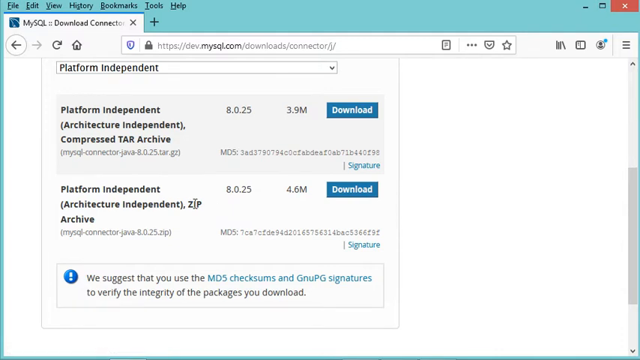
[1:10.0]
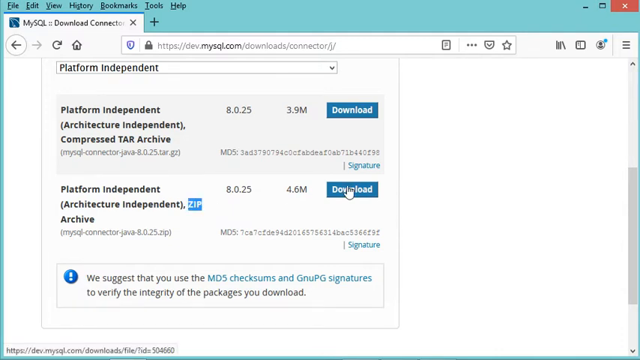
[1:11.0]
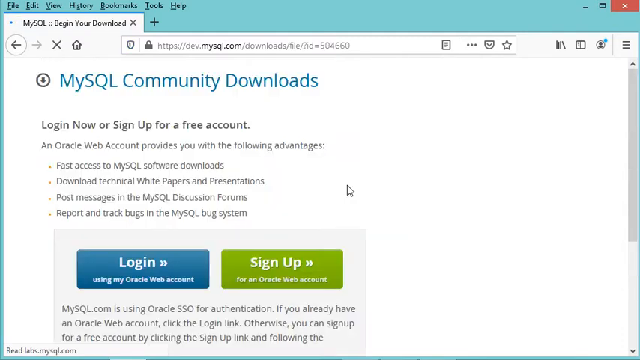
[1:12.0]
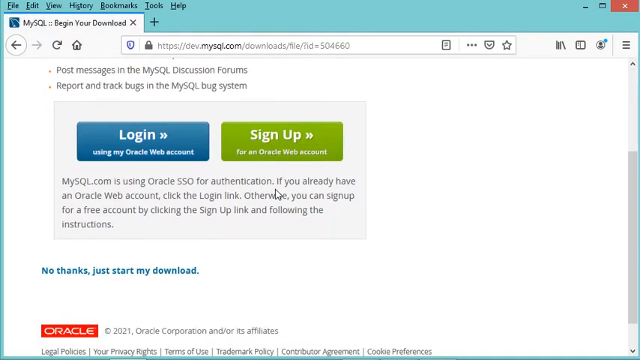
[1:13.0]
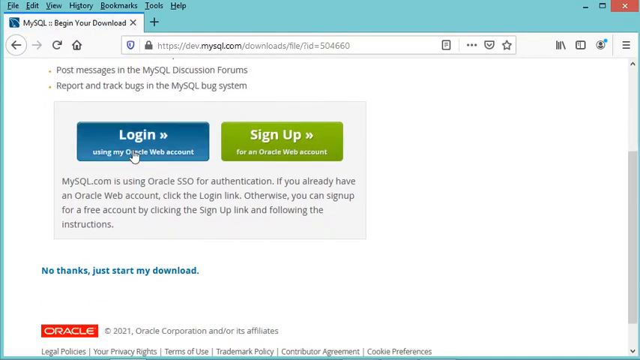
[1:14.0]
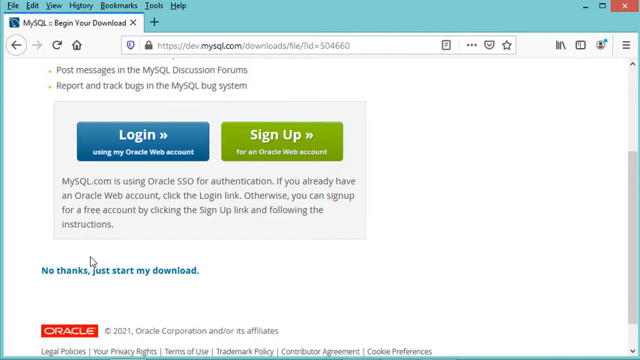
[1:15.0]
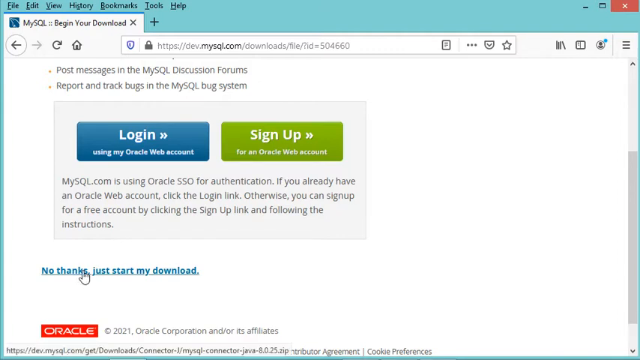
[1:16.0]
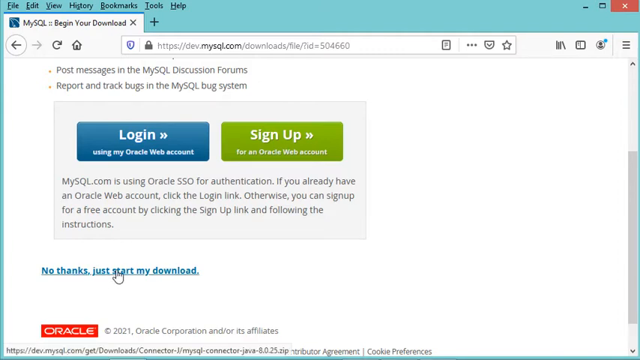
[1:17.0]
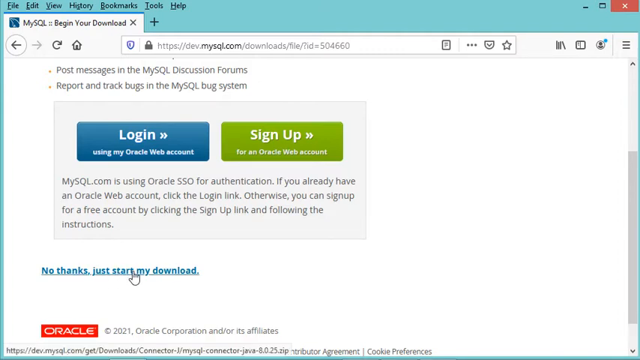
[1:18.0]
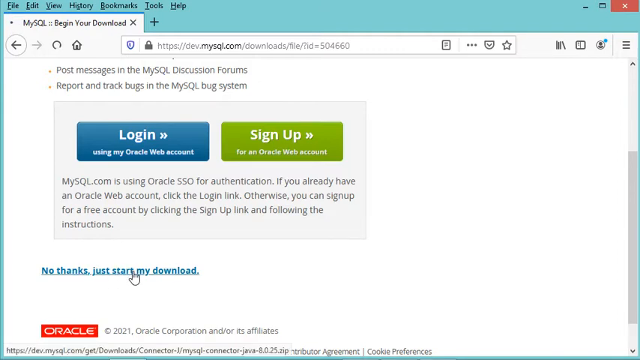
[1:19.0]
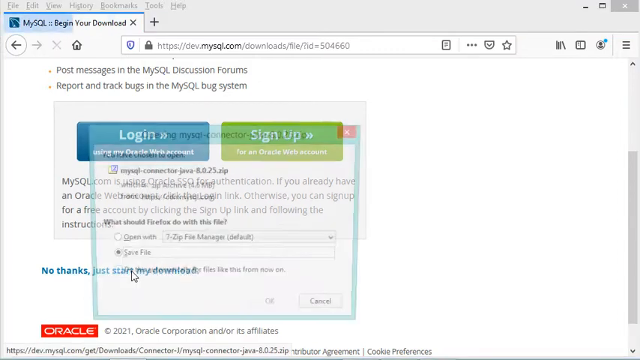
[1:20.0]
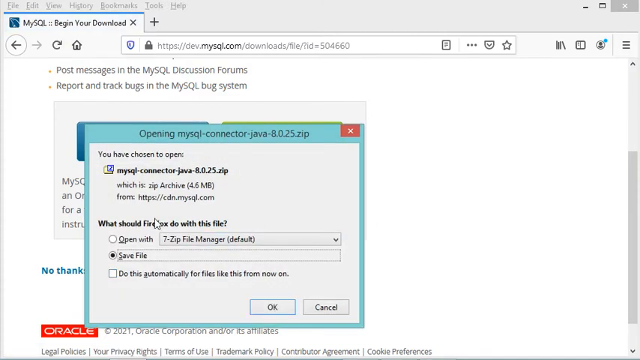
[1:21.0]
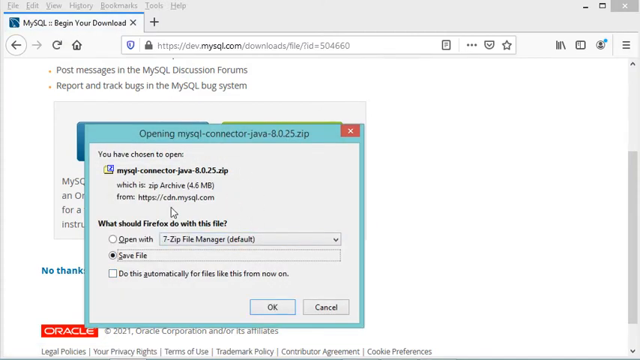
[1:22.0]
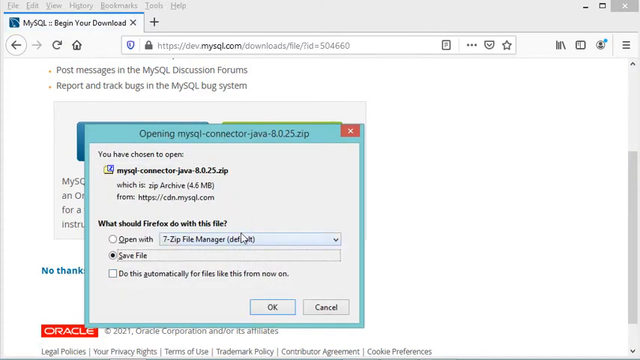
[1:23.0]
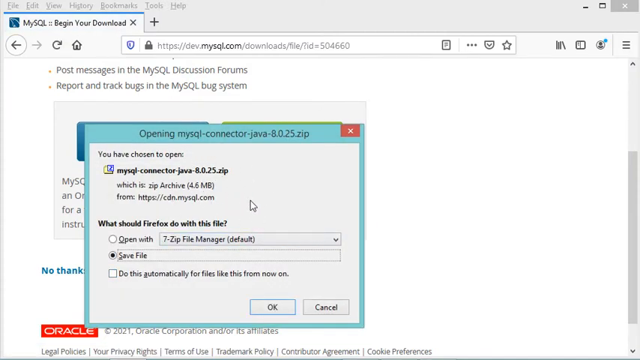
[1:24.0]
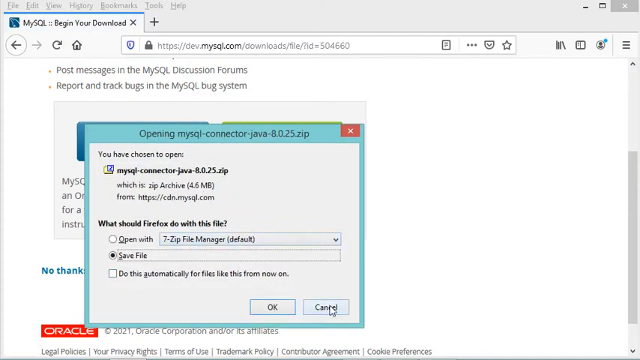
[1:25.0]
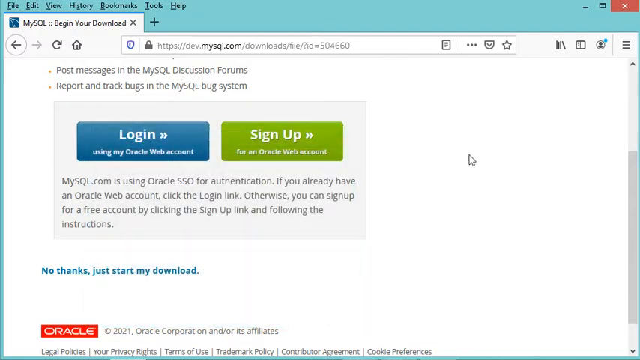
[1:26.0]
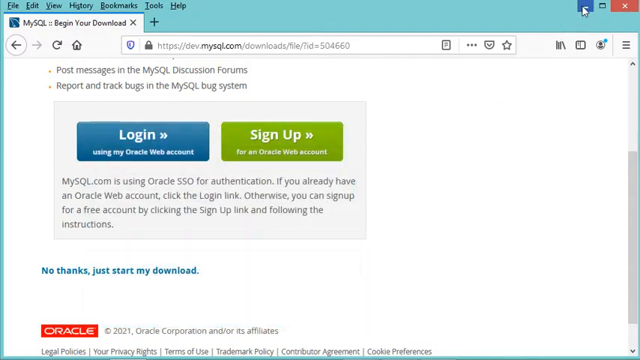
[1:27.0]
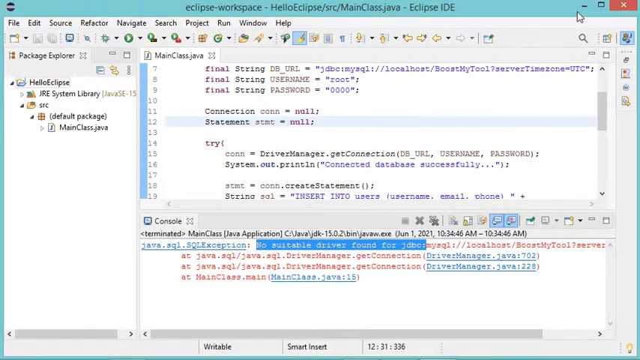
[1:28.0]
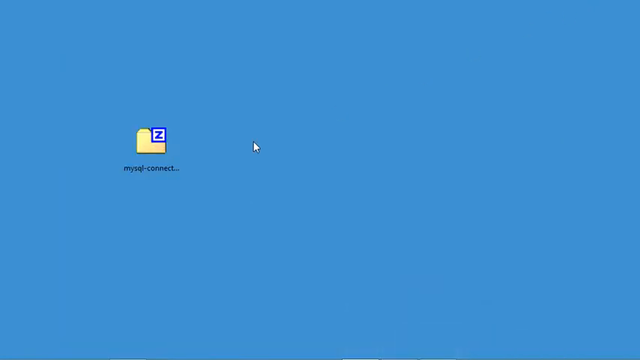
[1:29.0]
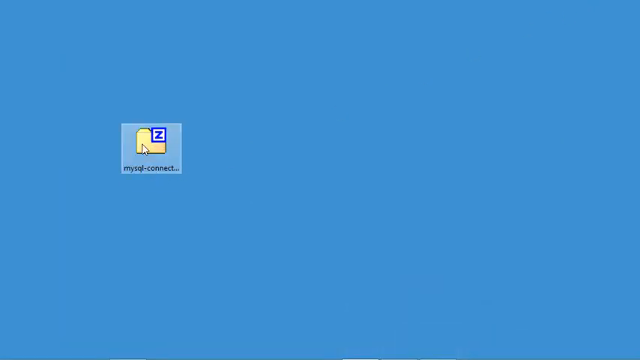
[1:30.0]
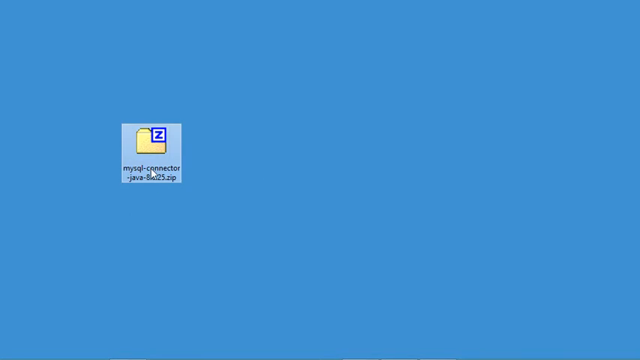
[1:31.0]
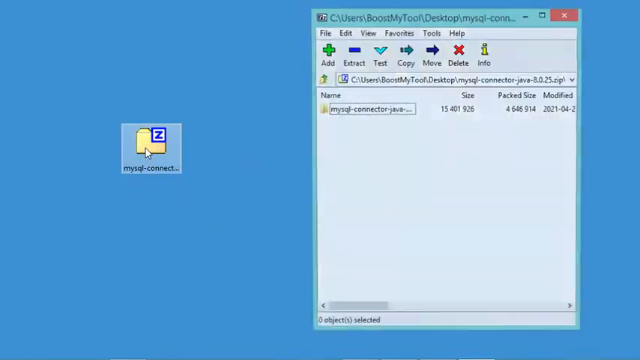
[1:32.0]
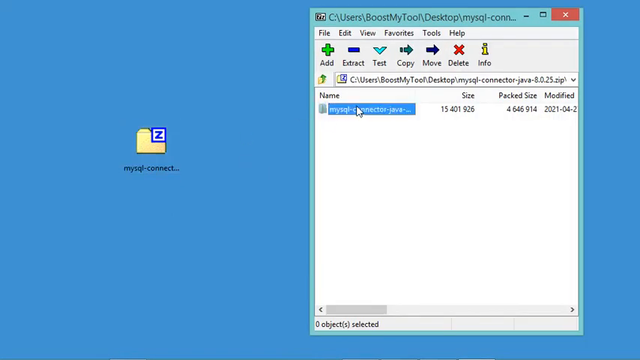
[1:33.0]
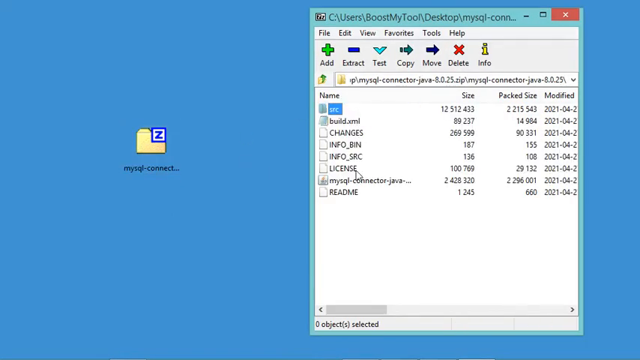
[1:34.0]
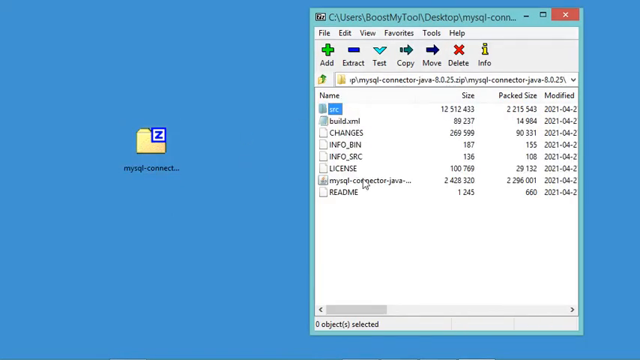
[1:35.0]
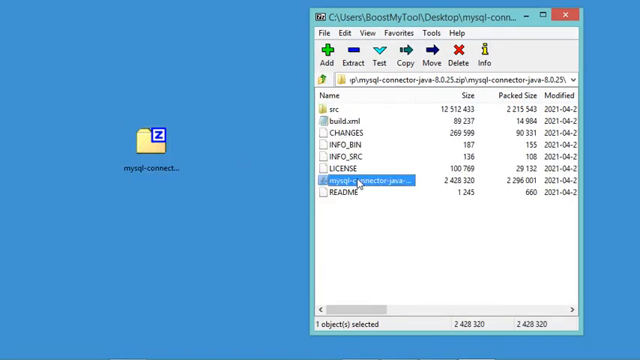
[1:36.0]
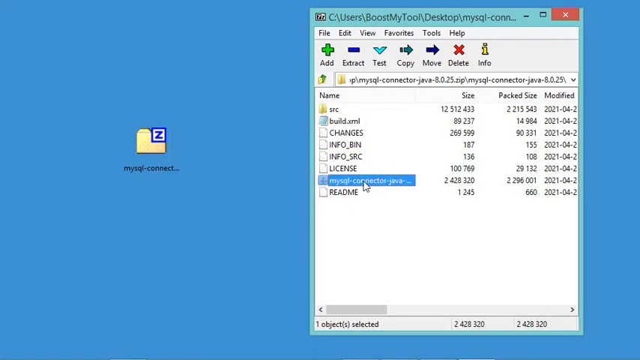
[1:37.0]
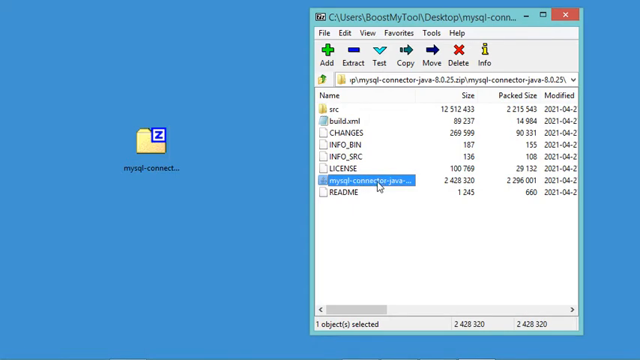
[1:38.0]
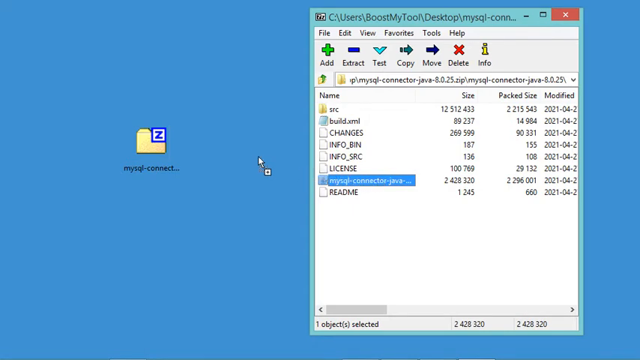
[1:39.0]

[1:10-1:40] A website at "dev.mysql.com/download/connector/j/" shows a drop-down box set to platform independent and two download buttons, one for the architecture independent compressed archive and one for the architecture independent zip archive. The user goes to the zip archive and clicks download, which leads to a screen reading "MySQL community downloads", "Log in now or sign up for a free account." and "An Oracle web account provides you with the following advantages", followed by "Fast access to MySQL software downloads", "Download technical white papers and presentations", "Post messages in the MySQL discussion forums" and "Report and track bugs in the MySQL bug system". There is a blue "log in using my Oracle web account" button and a "sign up for an Oracle web account" option. The user scrolls down to more text: "mysql.com is using Oracle SSO for authentication. If you already have an Oracle web account, click the login link. Otherwise, you can sign up for a free account by clicking the sign up link and following the instructions." Below it, blue text reads "no thanks, just start my download"; the user goes down to it and clicks it. A box appears reading "opening MySQL connector Java zip" and "You have chosen to open MySQL connector Java zip, which is zip archive 4.6 megabytes from cdn.mysql.com. What should Firefox do with this file?", with choices to open with 7-zip file manager or save the file. The mouse kind of circles around the box, then goes to cancel. The user minimizes the screen and another program, opens a folder on the computer containing the zip file, opens the folder, goes to the MySQL Connector Java application, and drags it to the main desktop screen.